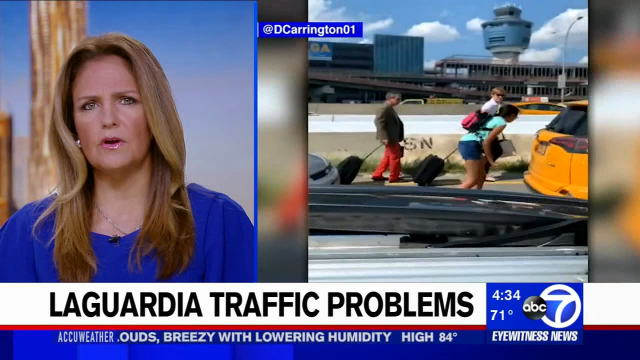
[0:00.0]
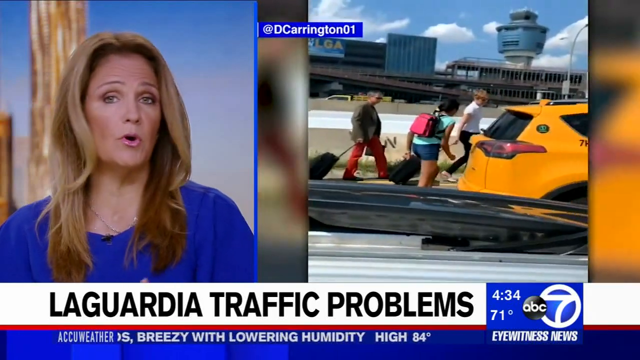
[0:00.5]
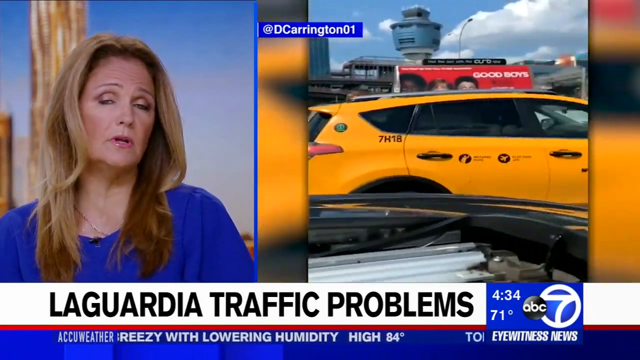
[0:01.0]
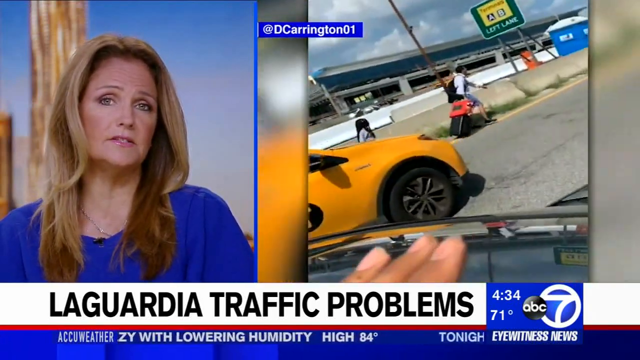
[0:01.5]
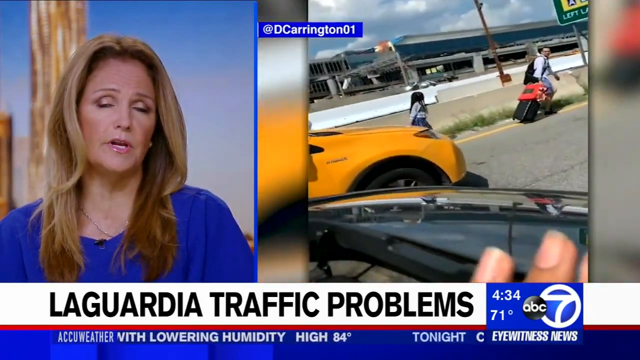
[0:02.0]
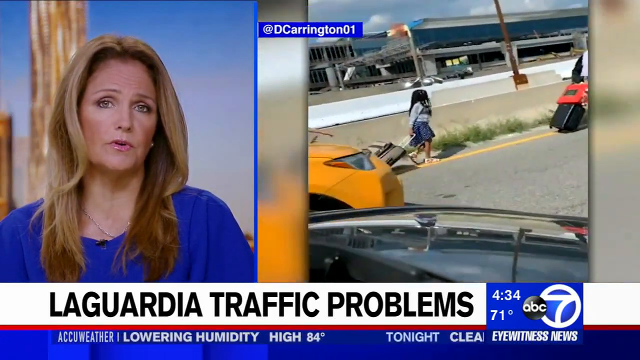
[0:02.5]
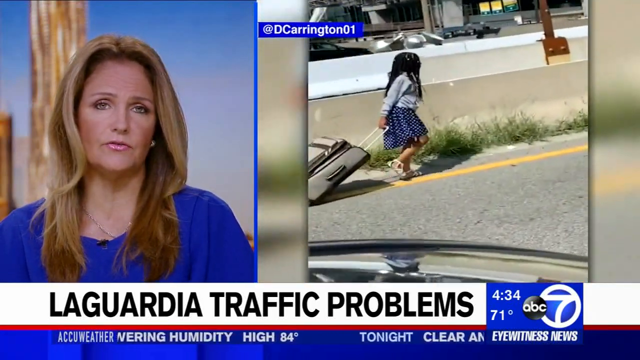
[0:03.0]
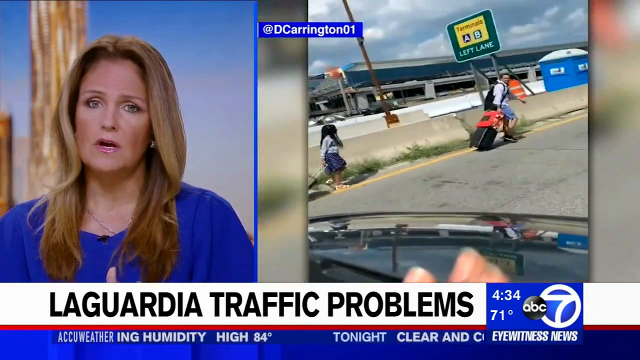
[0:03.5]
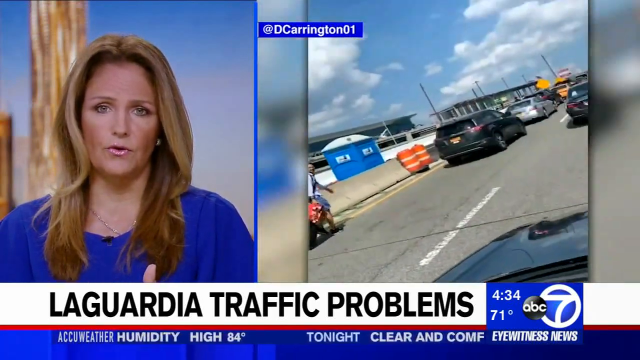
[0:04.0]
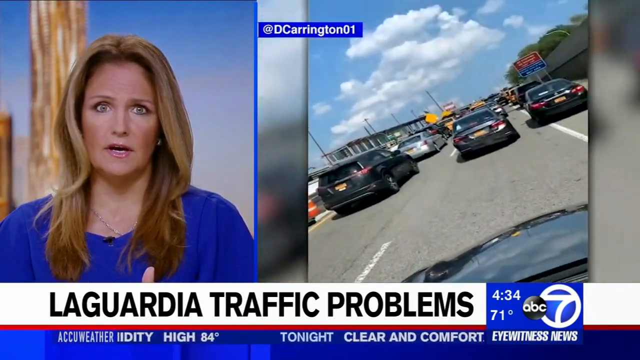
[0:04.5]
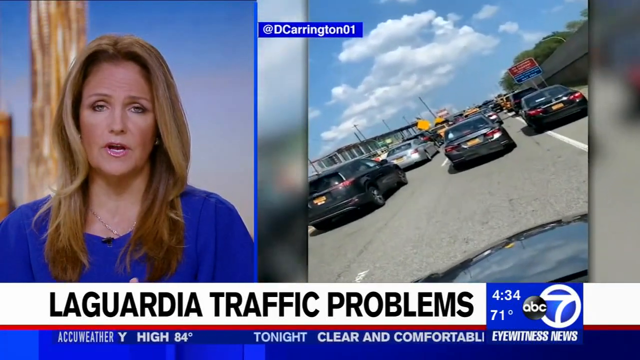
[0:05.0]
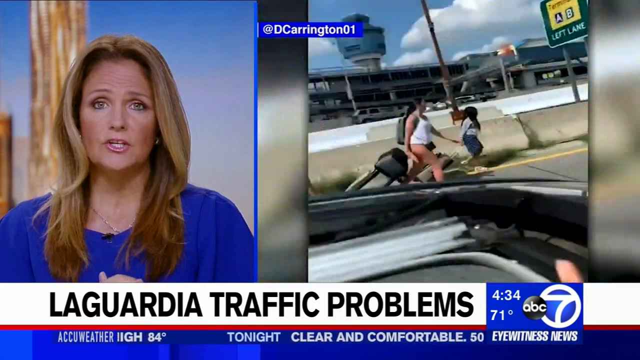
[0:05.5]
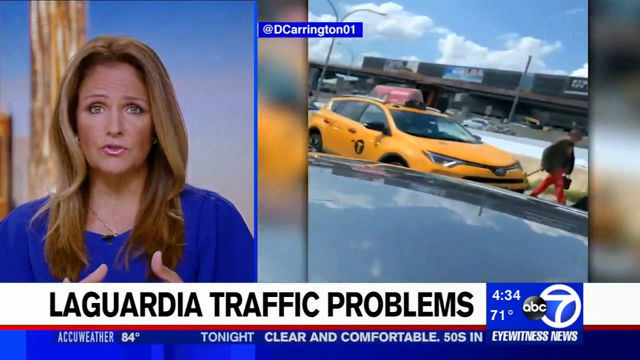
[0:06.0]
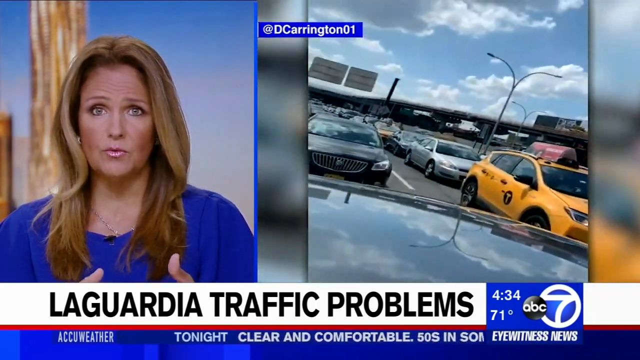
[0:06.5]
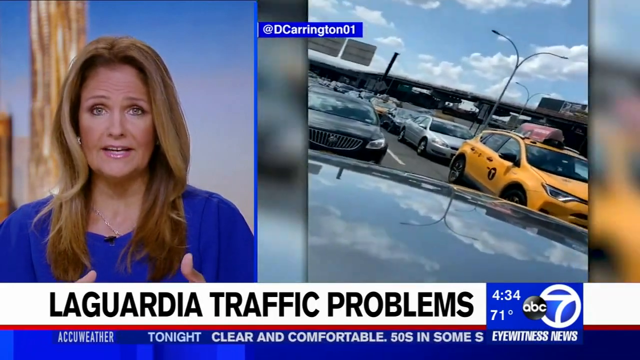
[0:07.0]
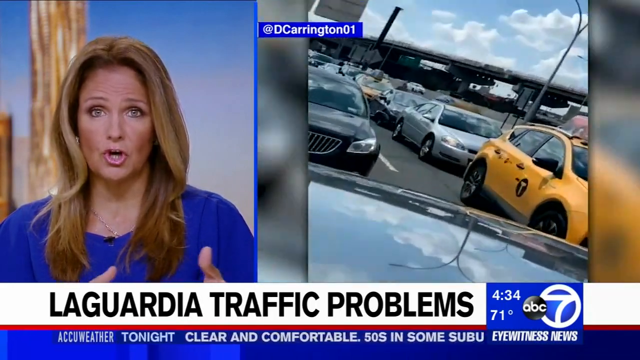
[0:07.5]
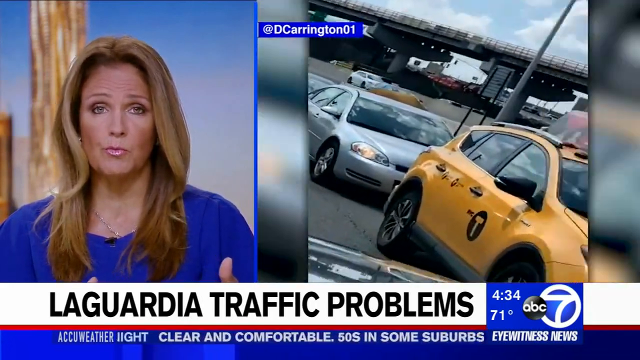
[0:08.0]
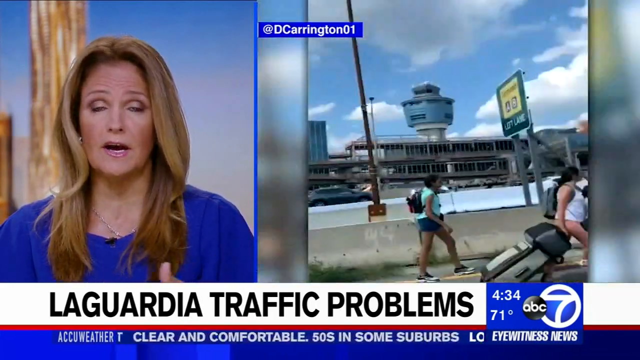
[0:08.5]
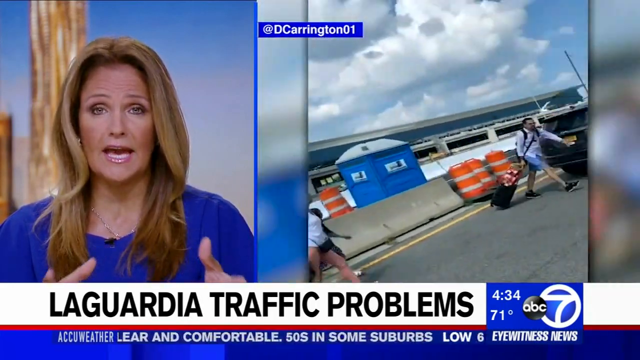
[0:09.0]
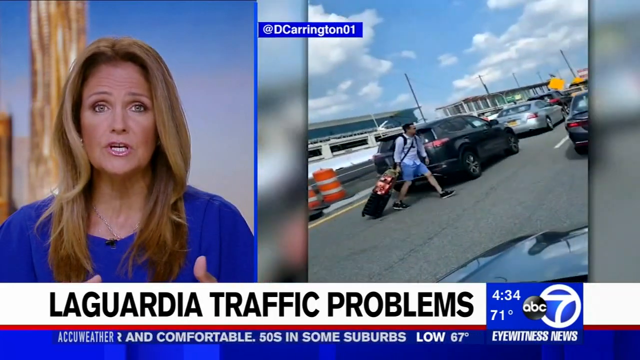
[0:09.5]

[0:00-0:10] The screen is split into two boxes. In the left box is a lady with blonde hair and a blue shirt, wearing a chain around her neck and earrings. In the right box, people are trekking along, some holding suitcases and some with backpacks; they seem disappointed with the traffic. A yellow car is also in the picture. Text reads "LaGuardia traffic problems", with the time 4:34 PM and "ABC Eyewitness News". Another text reads "tonight clear and comfortable", with a low of 67 degrees. People continue trekking toward the airport with suitcases in their hands, seeming to be running late.